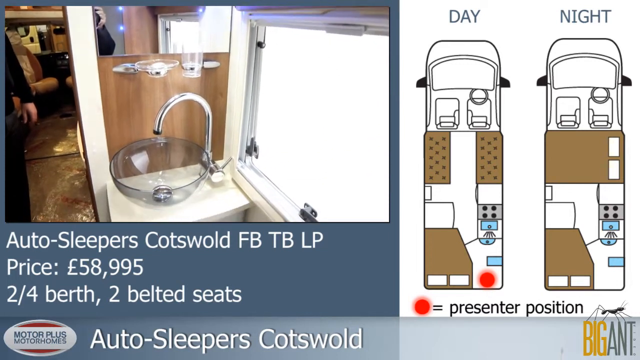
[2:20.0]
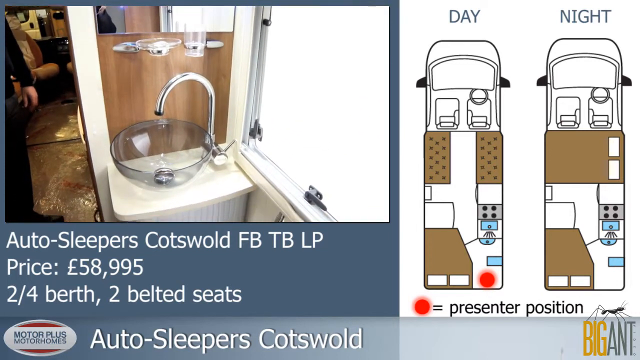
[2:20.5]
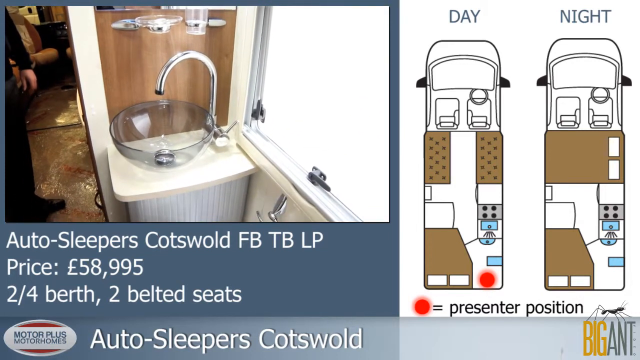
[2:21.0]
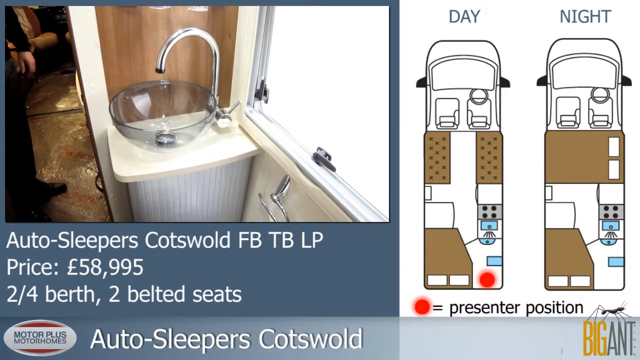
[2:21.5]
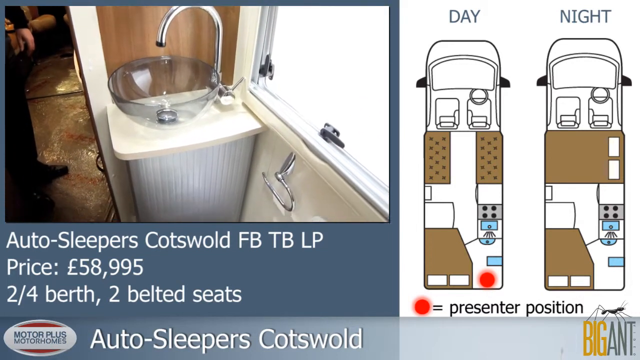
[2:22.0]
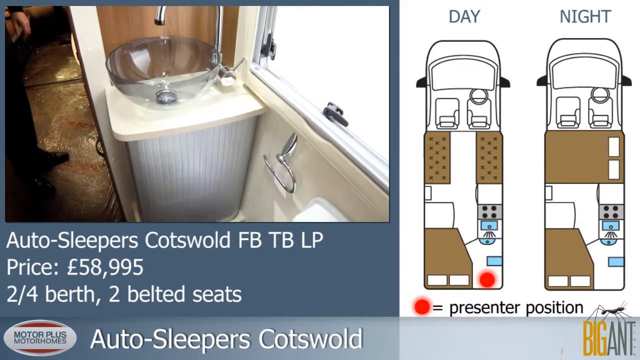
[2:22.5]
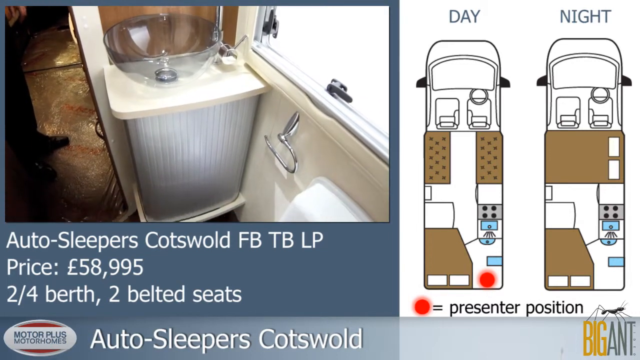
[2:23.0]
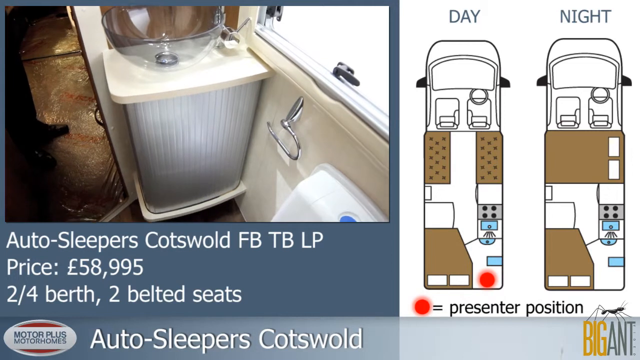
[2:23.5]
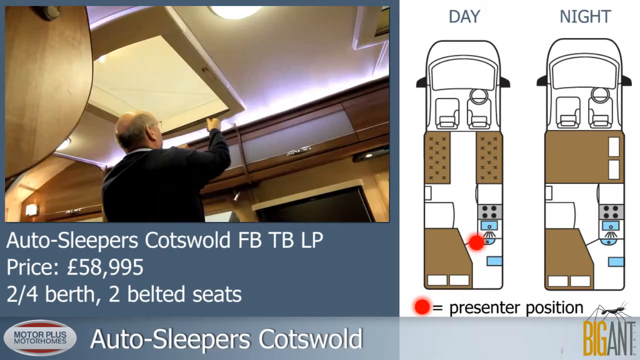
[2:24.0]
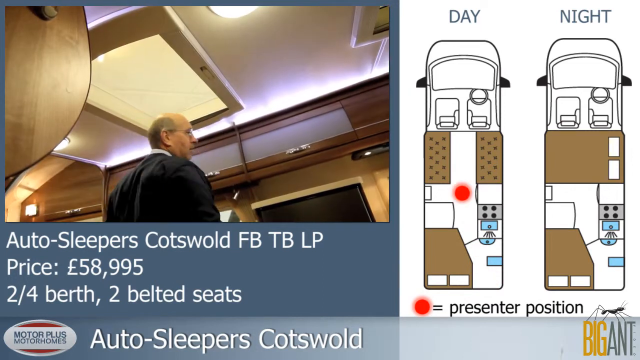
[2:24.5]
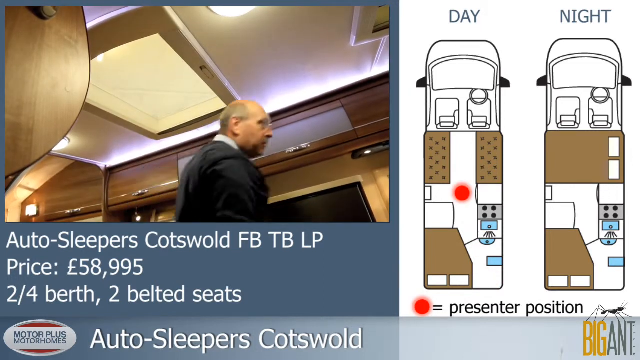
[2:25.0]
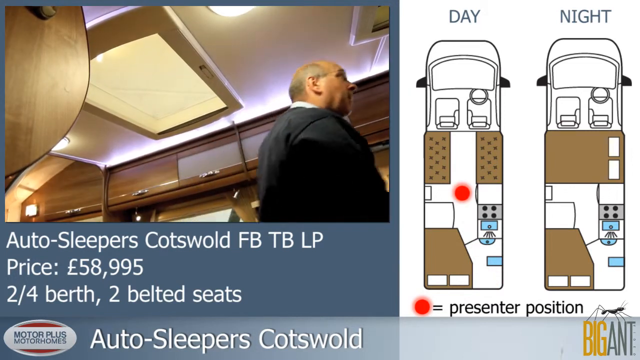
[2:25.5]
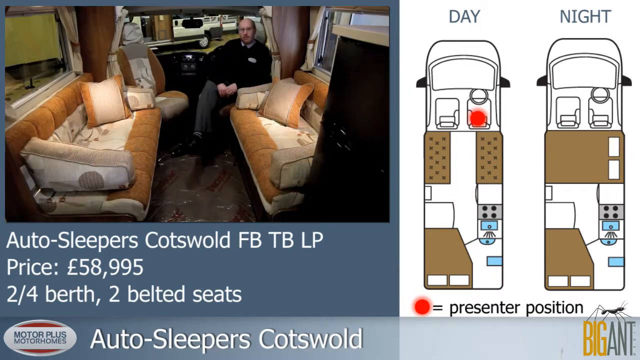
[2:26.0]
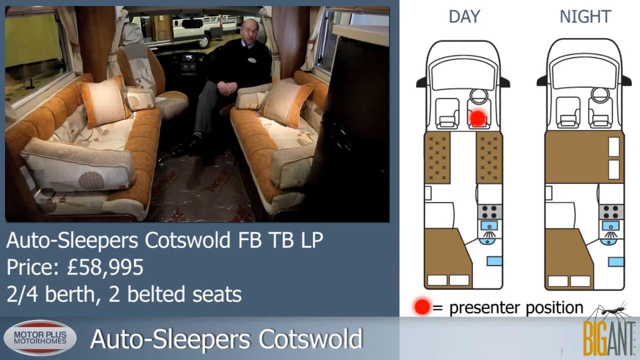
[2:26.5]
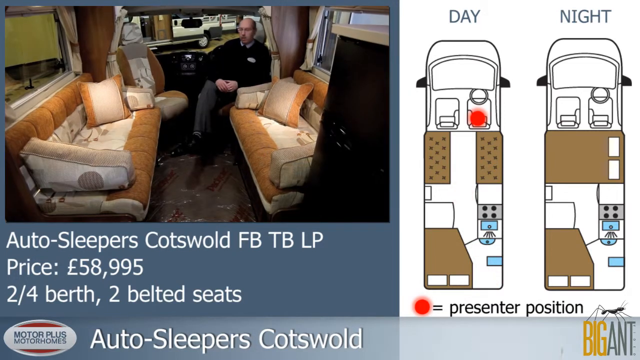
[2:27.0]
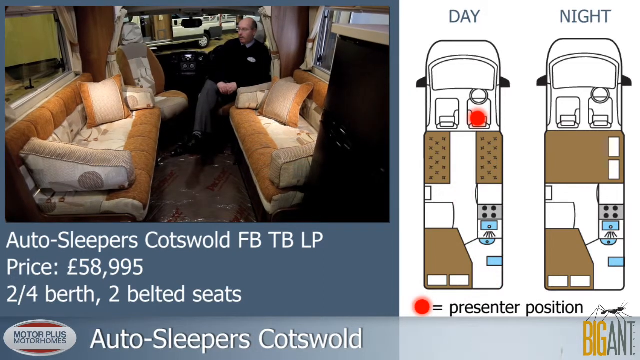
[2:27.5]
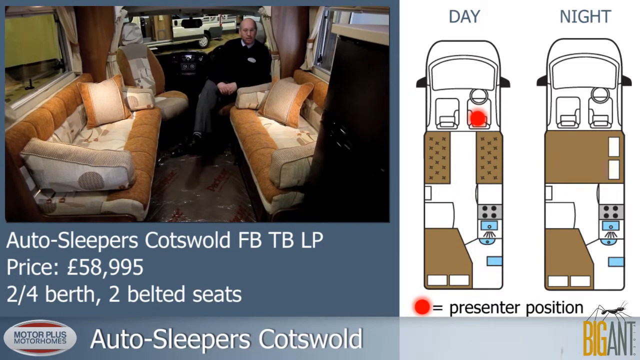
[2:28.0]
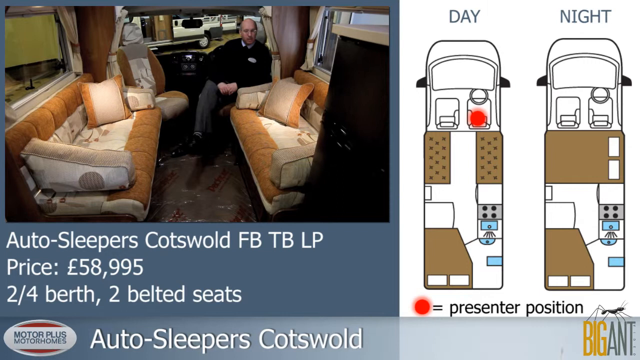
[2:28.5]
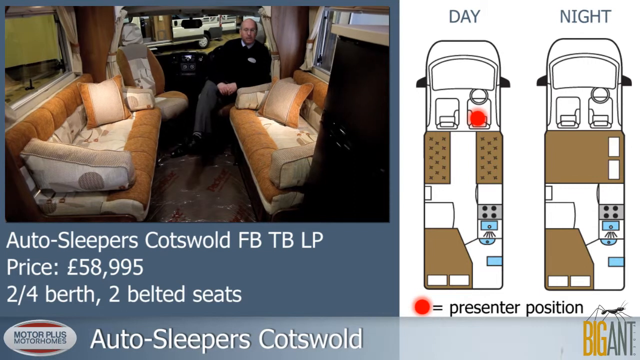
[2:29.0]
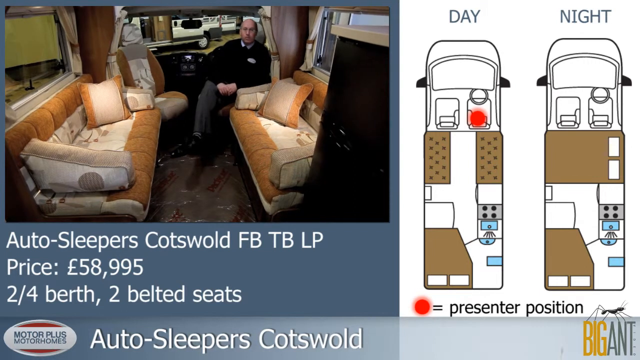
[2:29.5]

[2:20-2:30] The washing facilities are shown: a very small washbowl connected to a tap, by a window, and a holder for toilet paper or a towel. The salesman then goes back to the overhead storage, opening it left, right and centre. He is then seen back in the driver's seat, looking very relaxed.